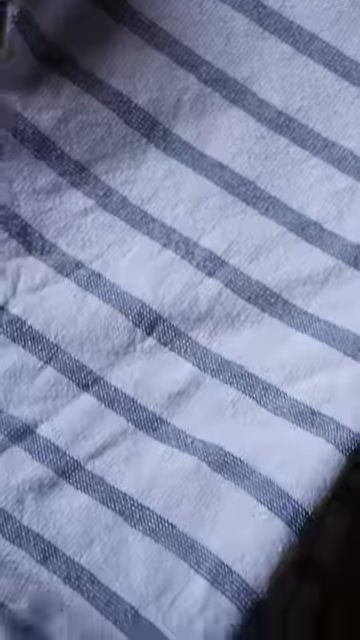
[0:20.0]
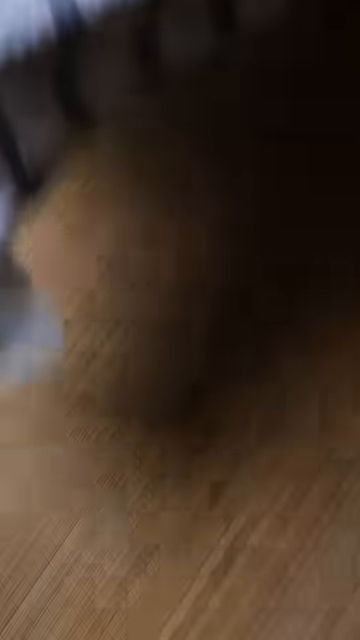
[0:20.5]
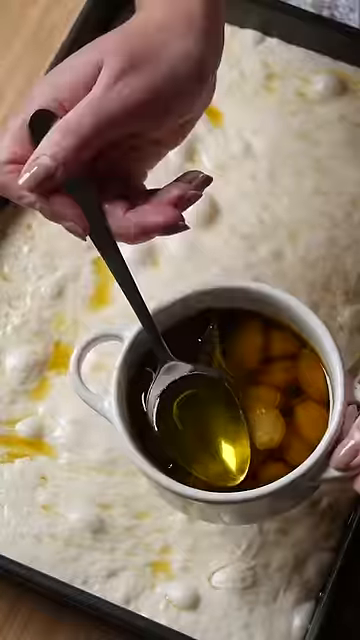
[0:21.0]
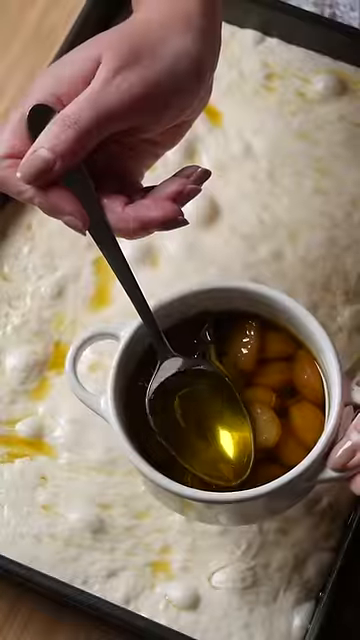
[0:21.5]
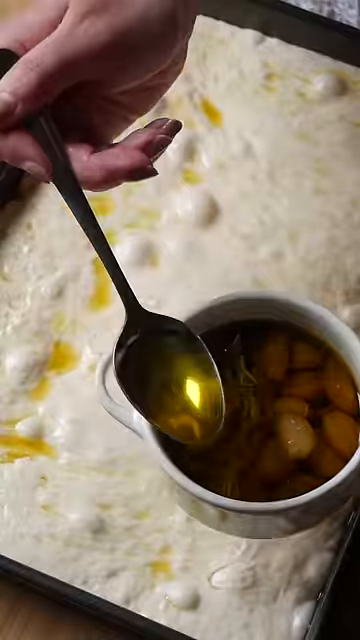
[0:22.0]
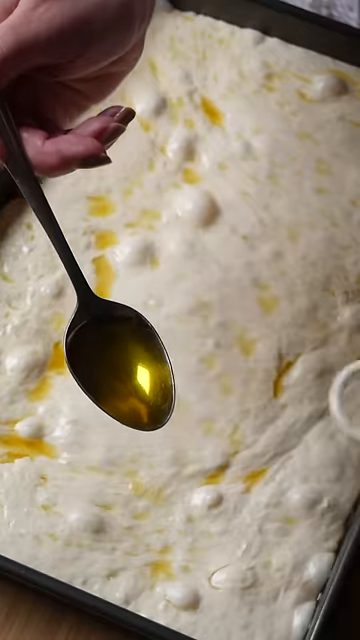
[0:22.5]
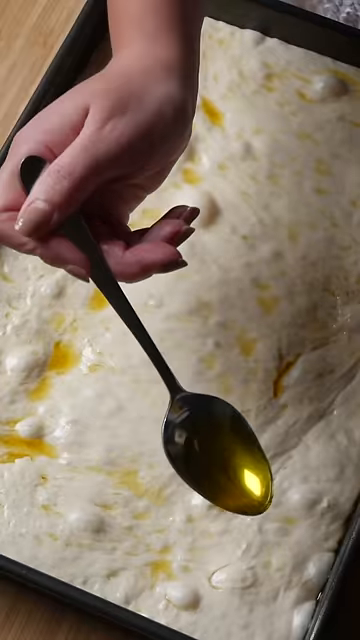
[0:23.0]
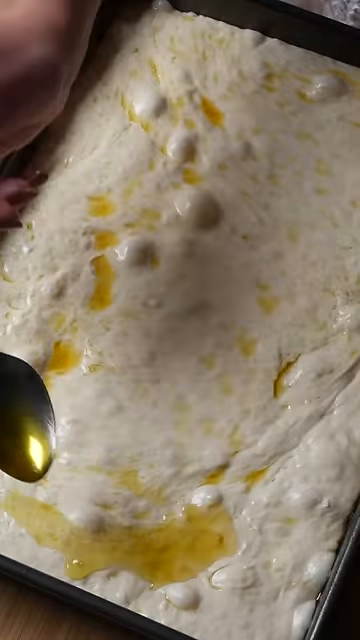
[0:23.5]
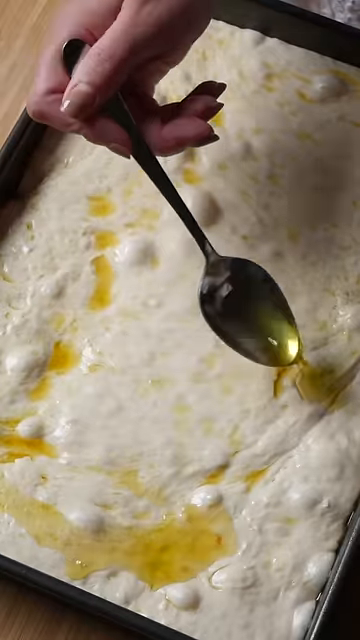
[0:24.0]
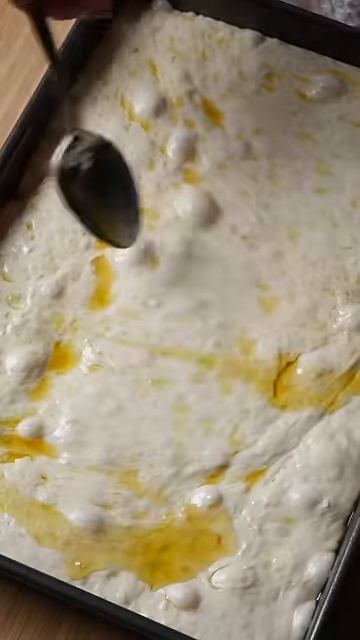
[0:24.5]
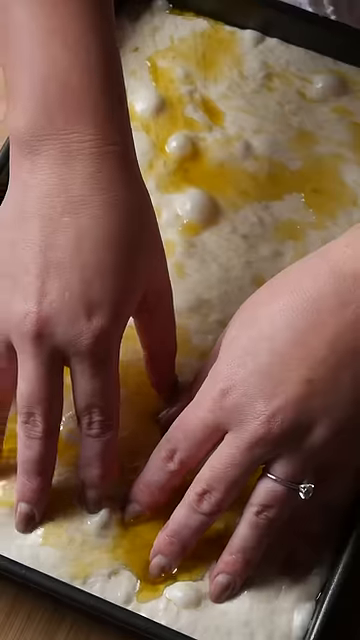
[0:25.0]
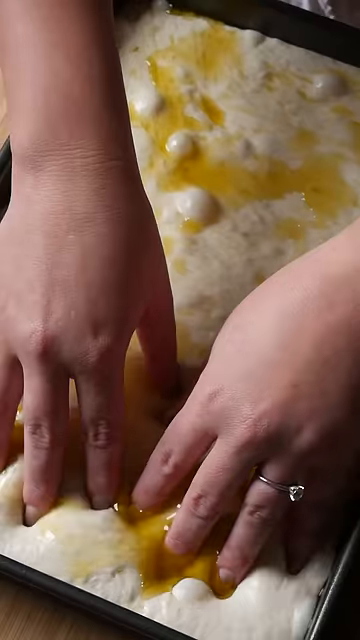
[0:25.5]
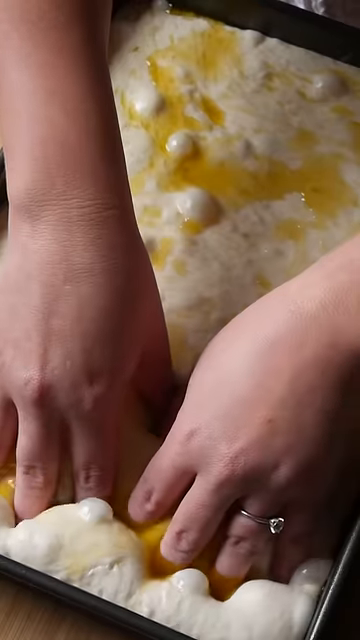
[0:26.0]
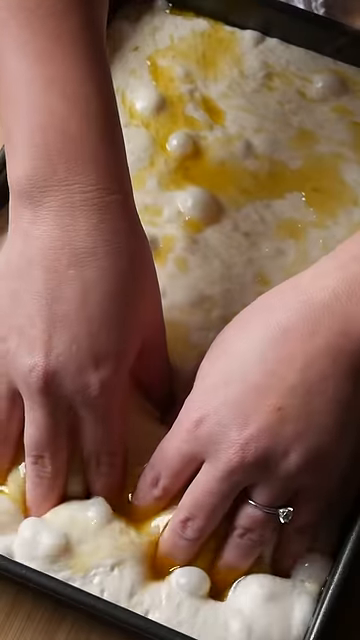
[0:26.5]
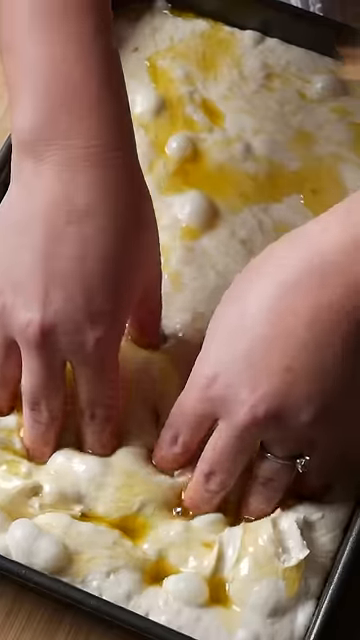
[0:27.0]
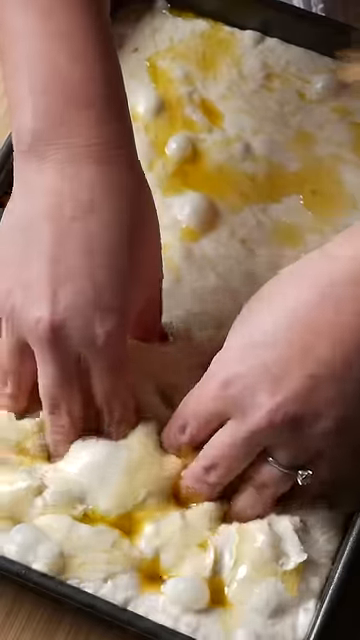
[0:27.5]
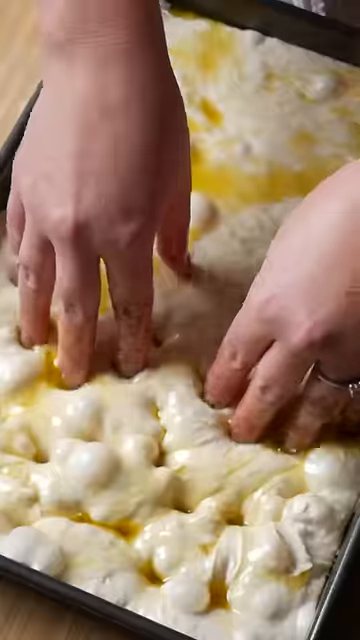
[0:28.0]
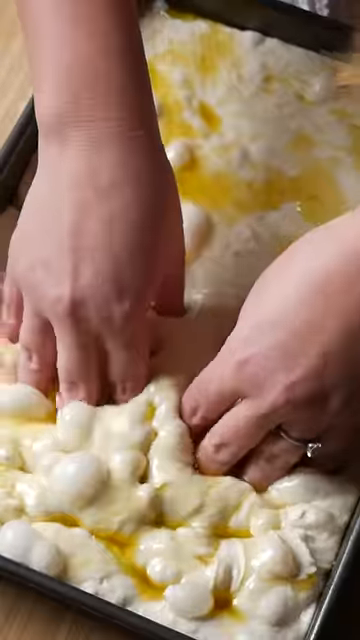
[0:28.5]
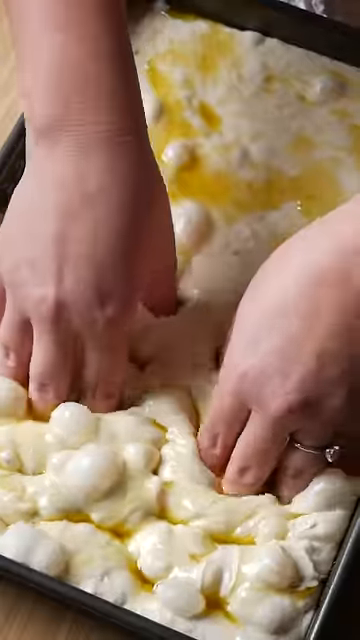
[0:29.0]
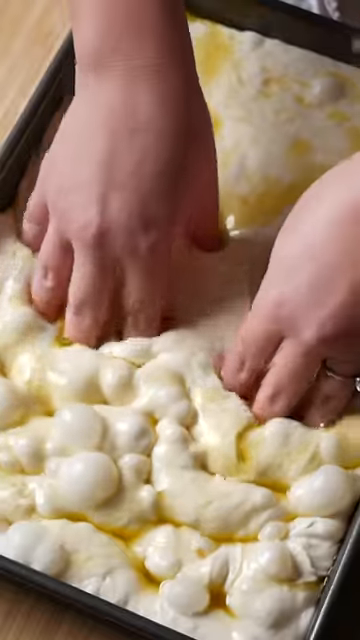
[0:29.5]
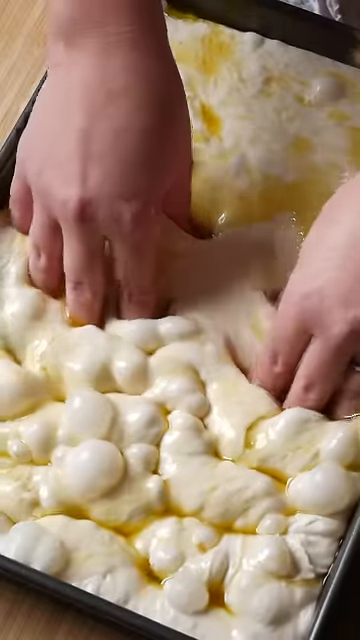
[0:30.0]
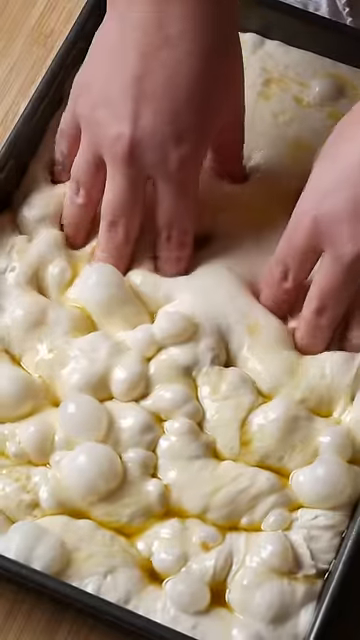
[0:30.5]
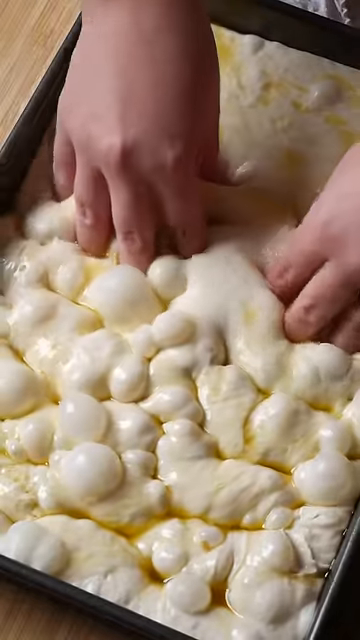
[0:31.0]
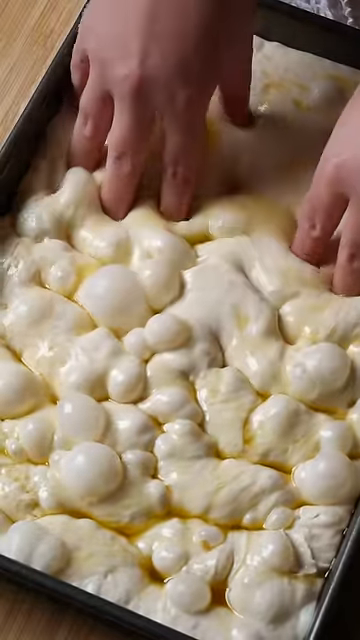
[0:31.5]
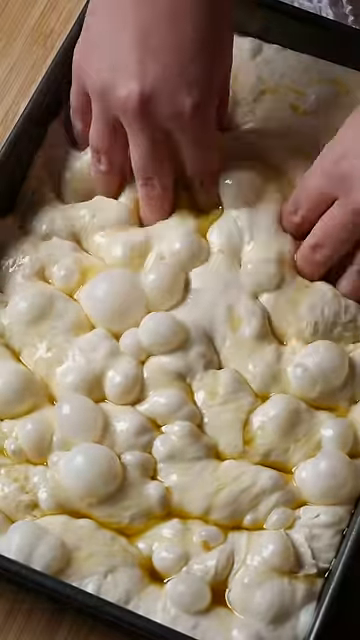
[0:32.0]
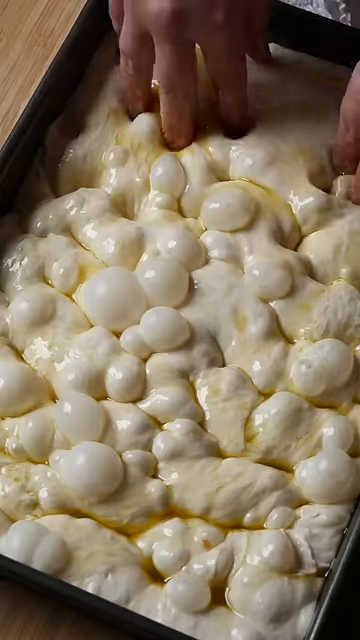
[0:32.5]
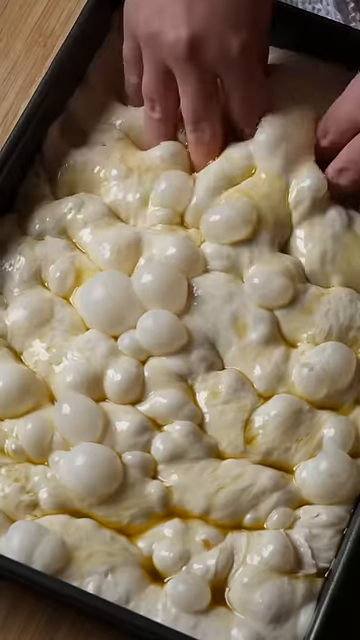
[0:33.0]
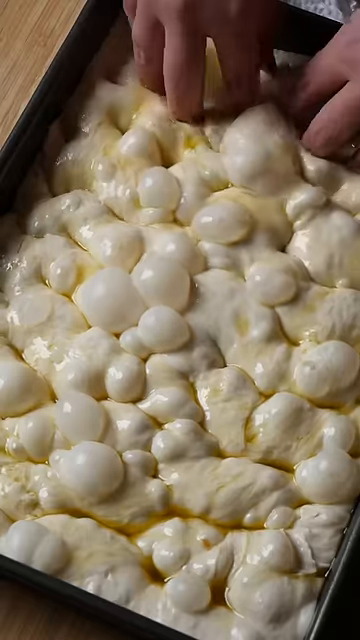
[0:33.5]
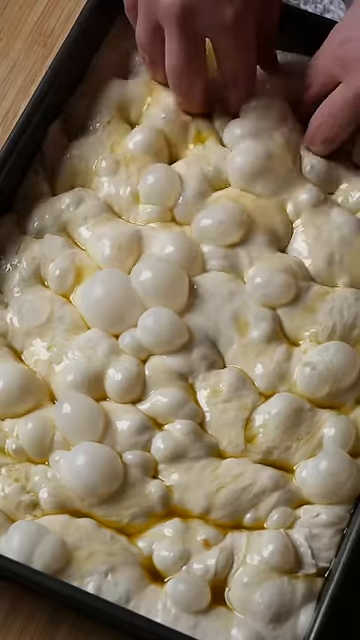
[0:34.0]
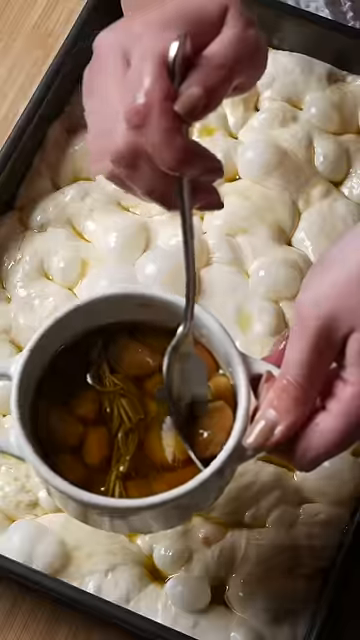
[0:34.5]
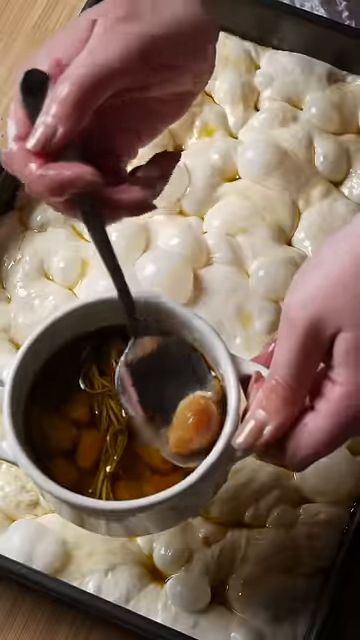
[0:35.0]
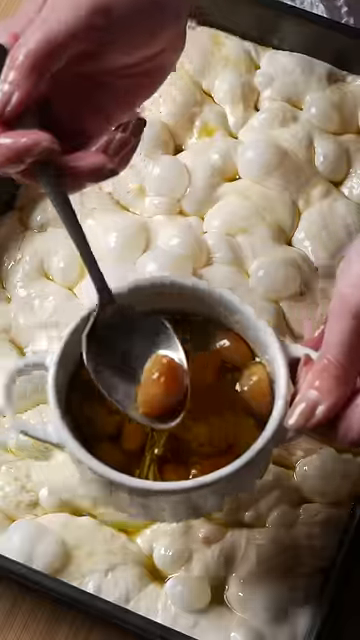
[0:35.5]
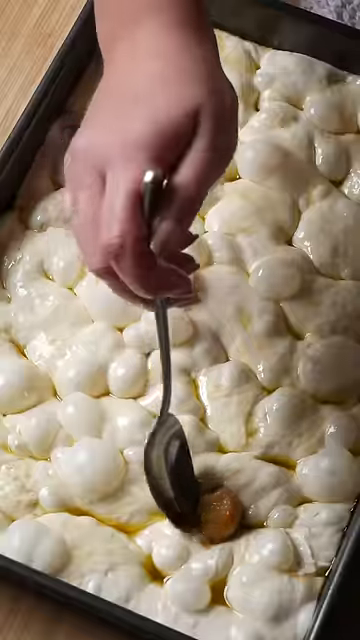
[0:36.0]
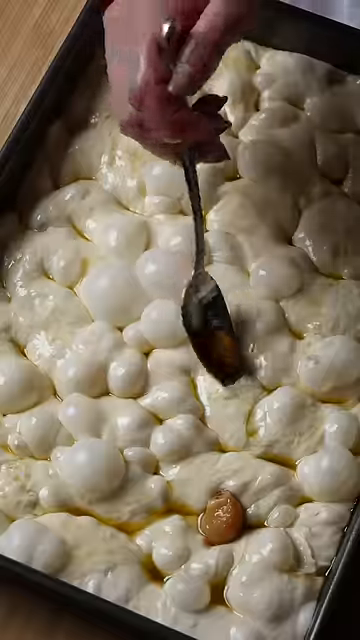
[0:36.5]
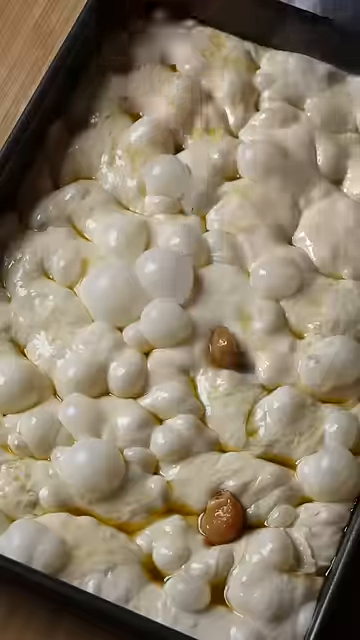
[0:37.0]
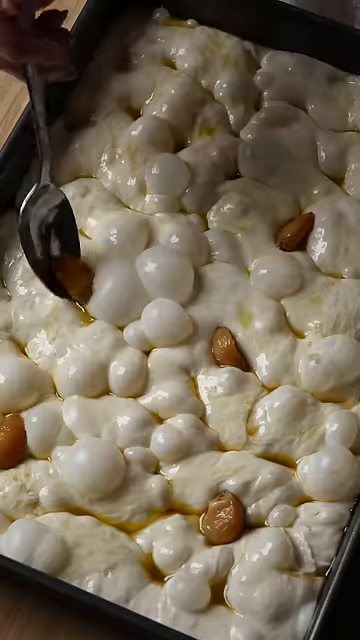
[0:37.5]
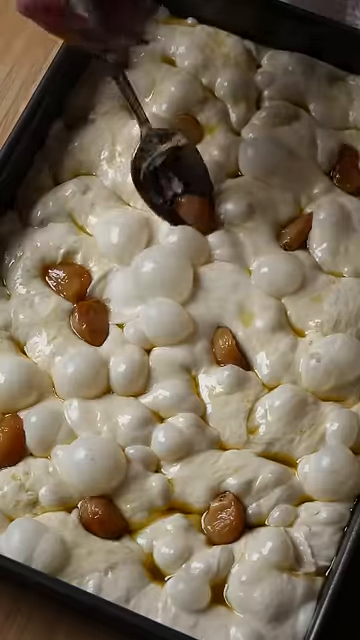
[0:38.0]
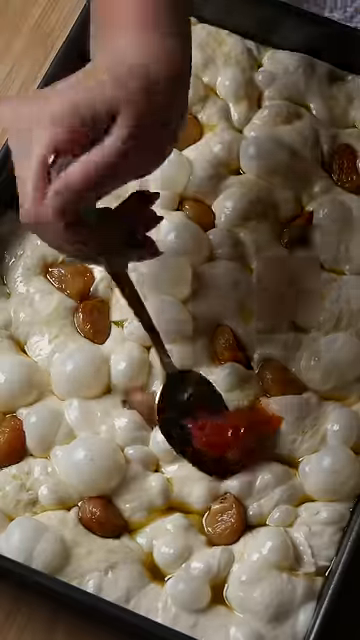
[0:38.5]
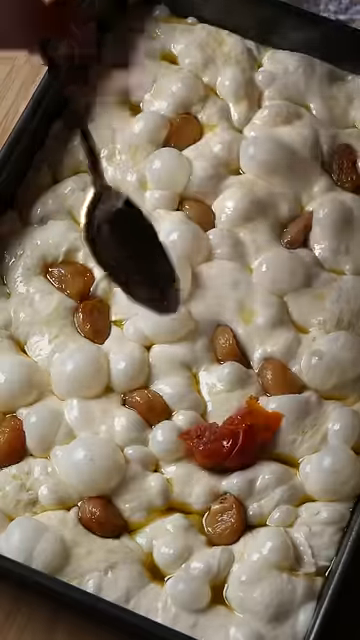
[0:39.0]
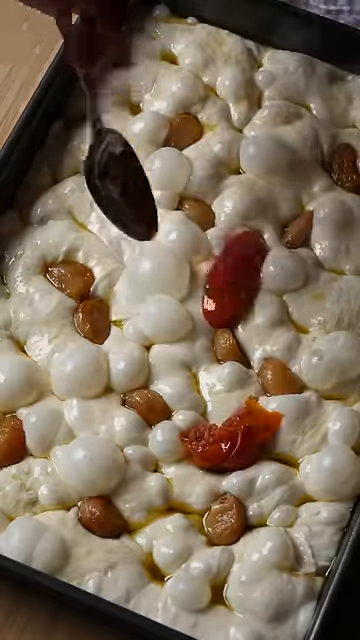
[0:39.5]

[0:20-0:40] The video starts with a white Le Creuset mini pot with peeled garlic inside as olive oil is drizzled on top, followed by sprinkles of salt and pepper and a sprig of rosemary. The lid is put on, then taken off to show the sizzling garlic, cooked and out of the oven. Raw focaccia dough is layered into the oiled focaccia pan and spread to either side, then topped with a dish towel to rise. Once the dough is ready, it is sprinkled with more oil and fingers press deeply into it to create air pockets and holes for the garlic. A spoon scoops the garlic and sun-dried tomatoes out of the Le Creuset onto the dough, which is topped with bocconicini cheese, herbs and spices. The focaccia is then cooked and lightly browned. Towards the end, the finished focaccia is shown along with a very excited young woman. The video is titled Garlic Confit Sun-Dried Tomato and Baby Bocconicini Focaccia.